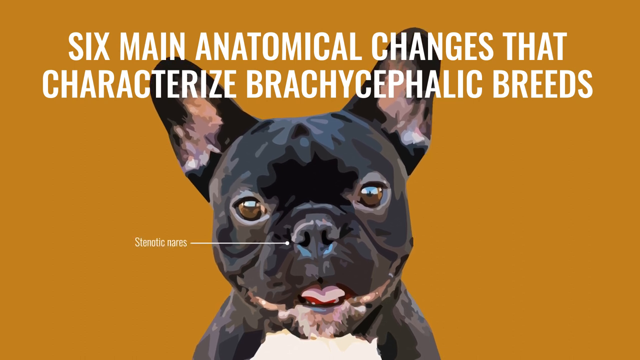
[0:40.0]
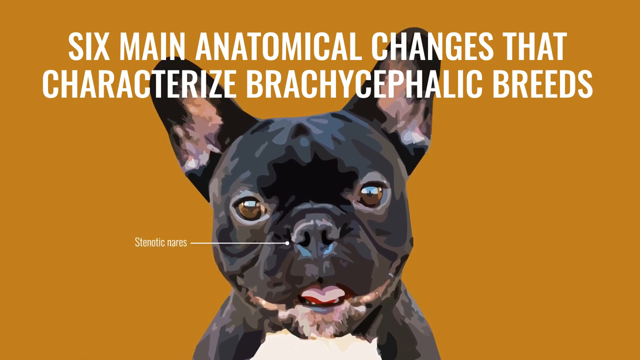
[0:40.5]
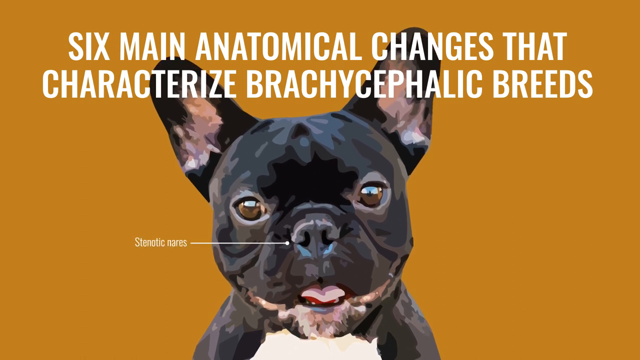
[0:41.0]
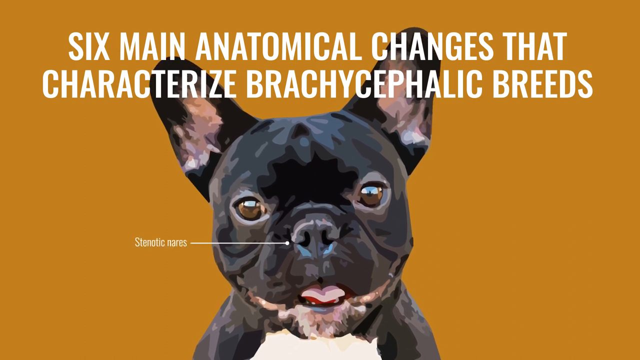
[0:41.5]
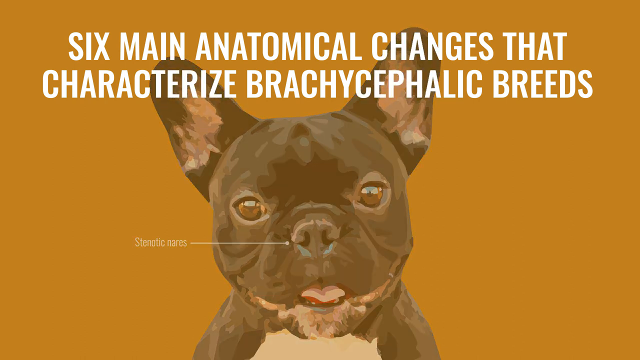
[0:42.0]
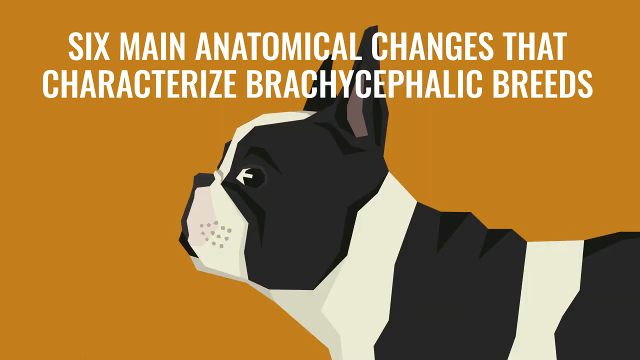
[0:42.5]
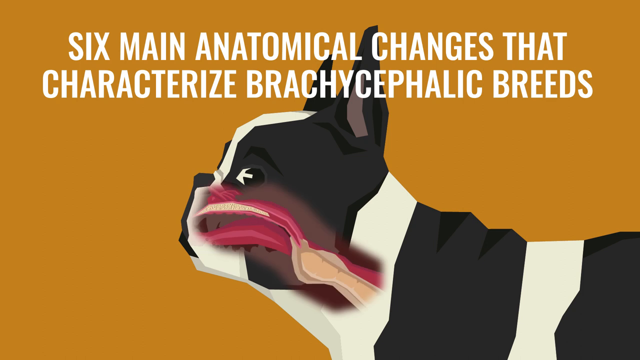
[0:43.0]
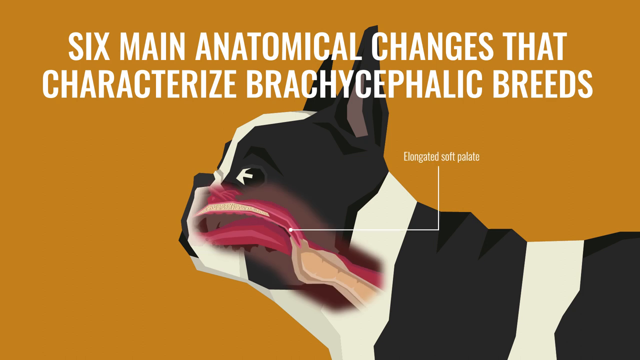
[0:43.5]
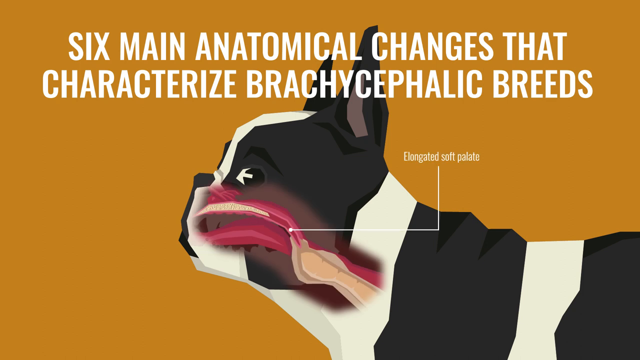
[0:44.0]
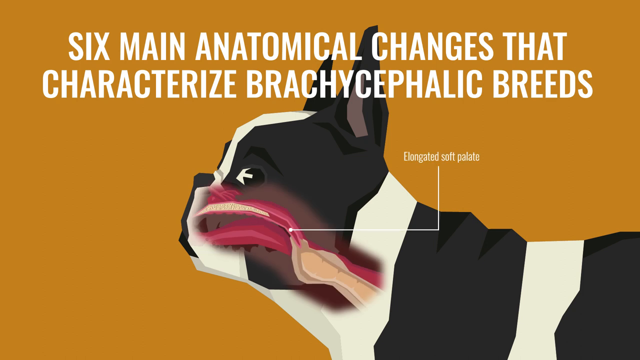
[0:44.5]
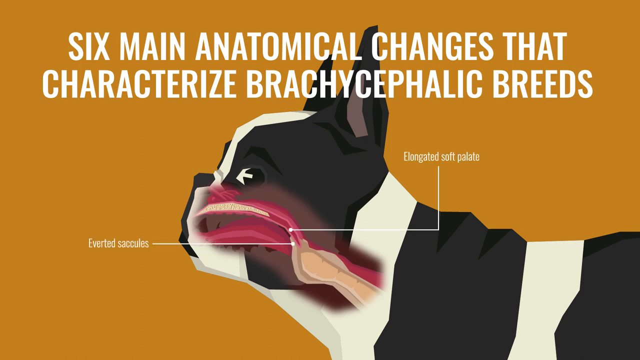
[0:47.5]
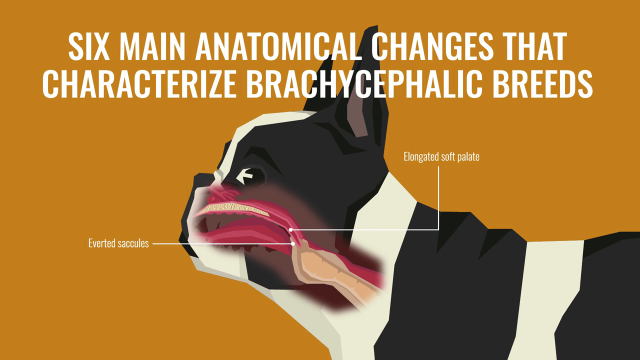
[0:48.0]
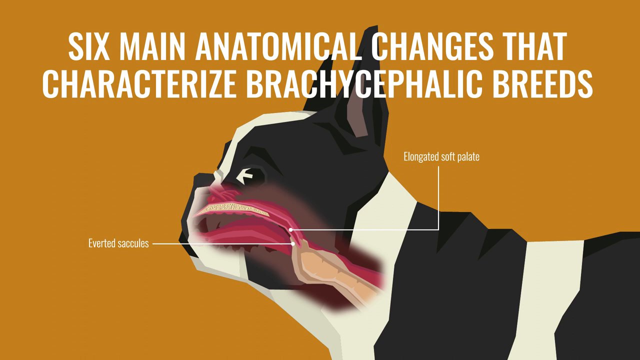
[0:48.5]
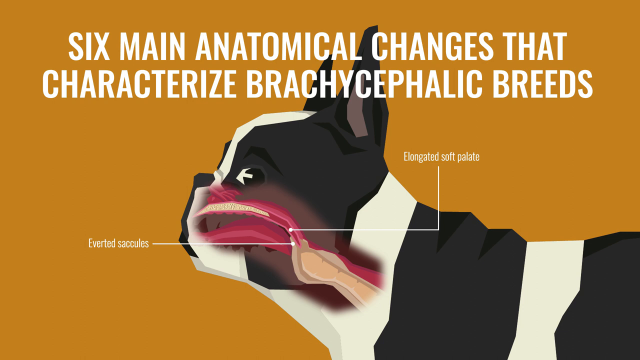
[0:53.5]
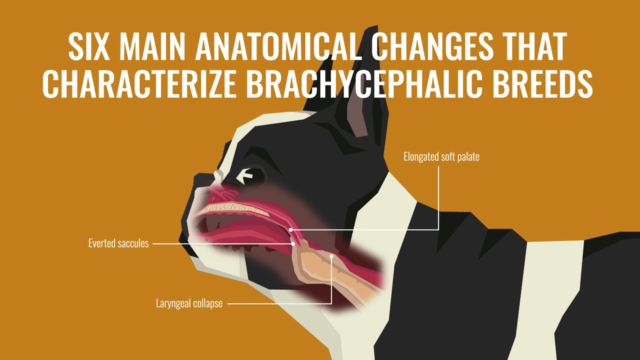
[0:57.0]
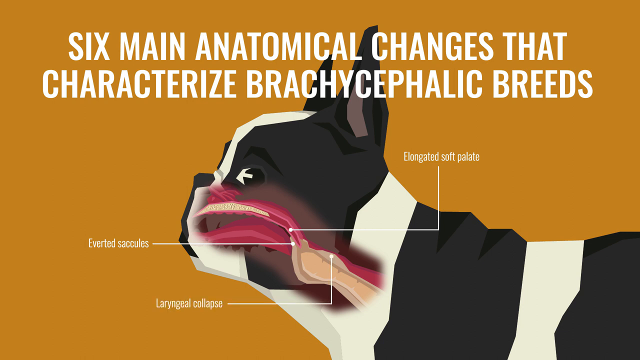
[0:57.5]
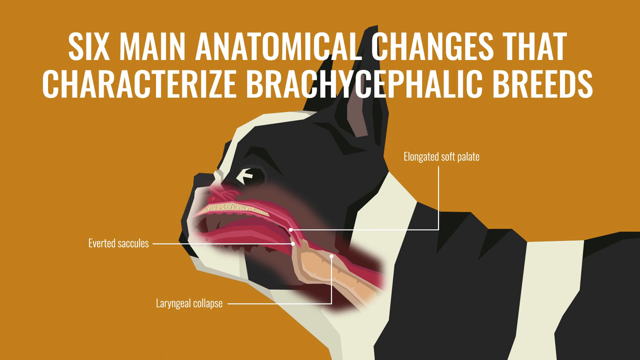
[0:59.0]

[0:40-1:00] The camera hovers on the bulldog with the nose caption for a moment, and then a new picture appears: a white and black bulldog seen from the side, in a kind of cutaway view of its head. Beneath the skin, the different tubes running from the nose and the mouth to the throat are visible, sort of as if the head is being dissected. A caption reading "elongated soft palate" appears, with its line pointing to just before the start of the throat and the nasal passage. Another caption, "everted saccules," points to the very beginning of the throat, apparently at the end of the mouth passage. A last caption, "laryngeal collapse," points within the throat, where a little section is labeled at the top.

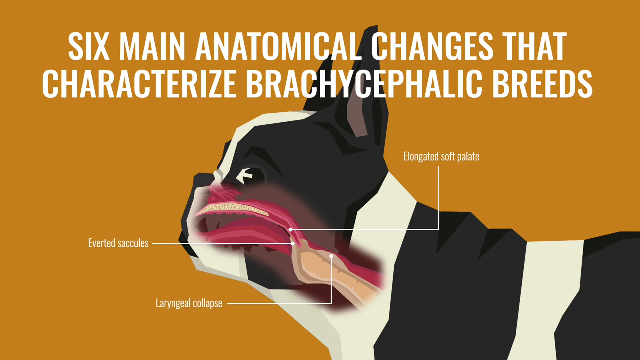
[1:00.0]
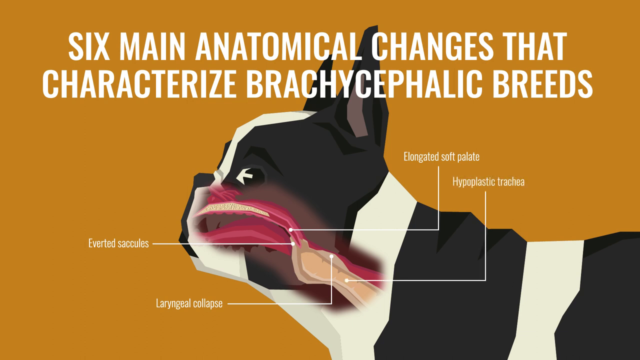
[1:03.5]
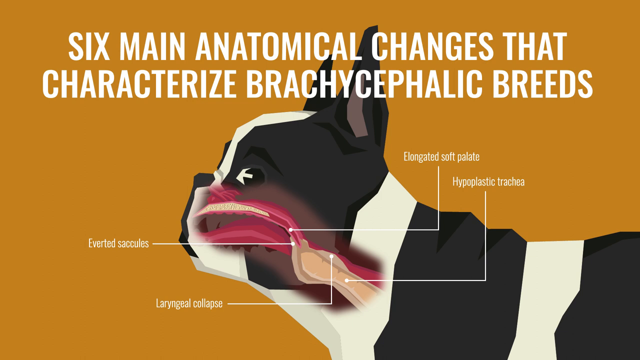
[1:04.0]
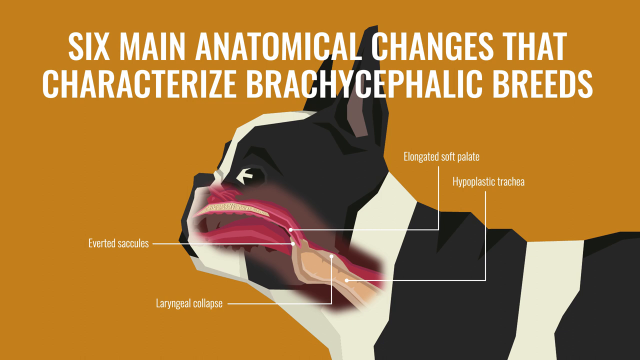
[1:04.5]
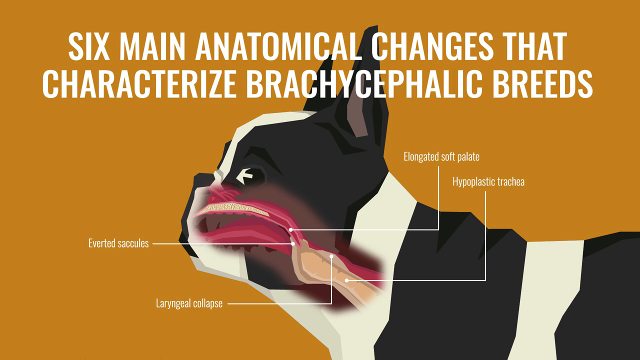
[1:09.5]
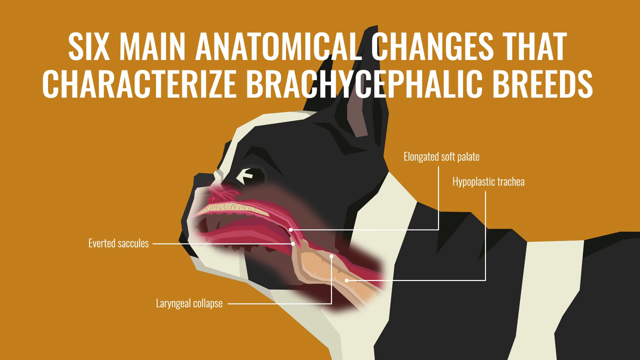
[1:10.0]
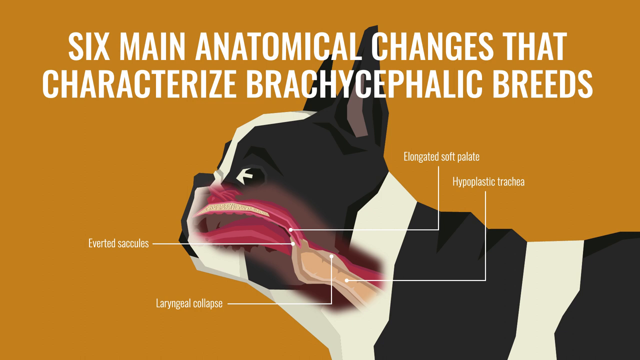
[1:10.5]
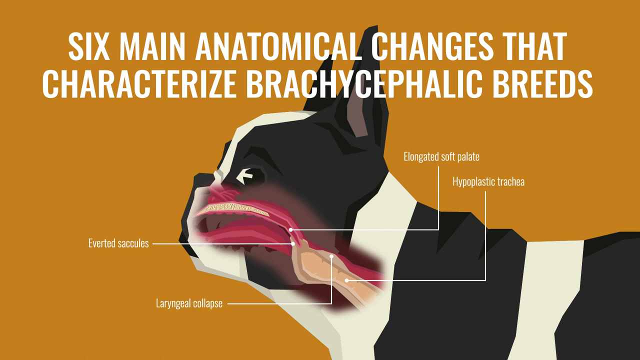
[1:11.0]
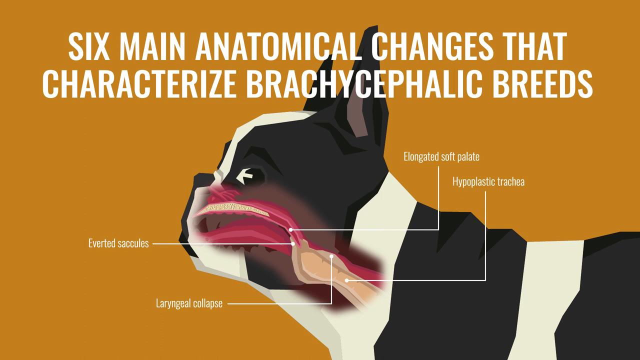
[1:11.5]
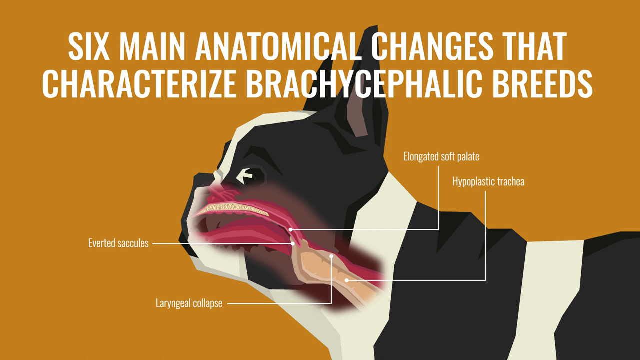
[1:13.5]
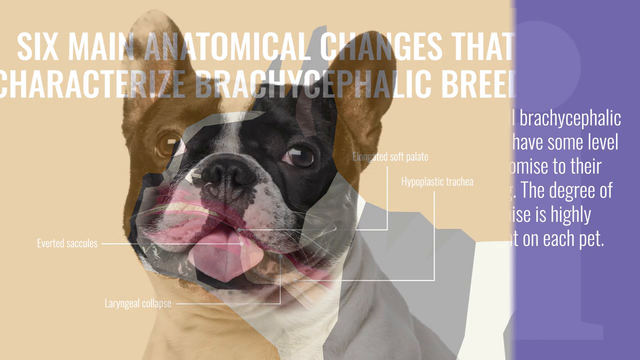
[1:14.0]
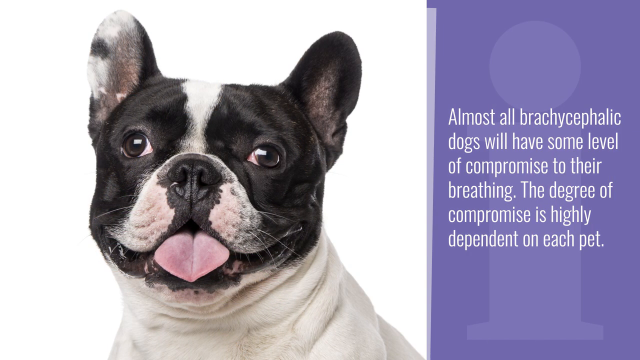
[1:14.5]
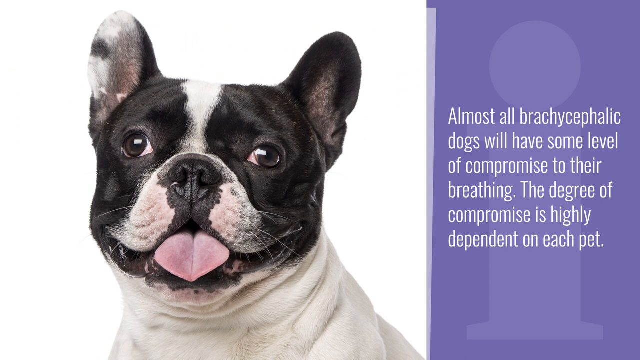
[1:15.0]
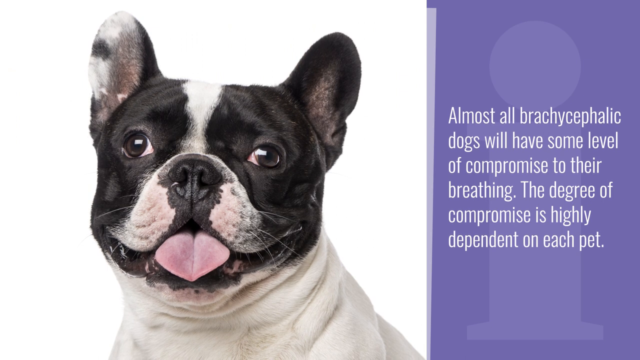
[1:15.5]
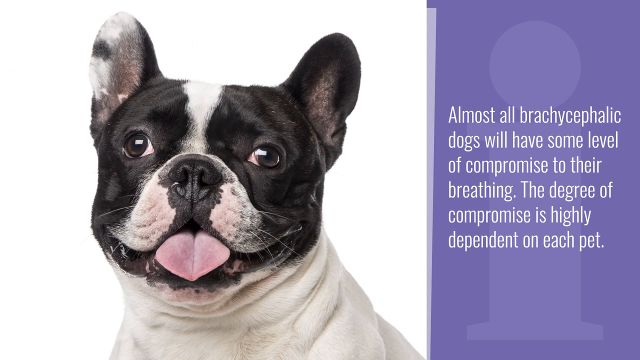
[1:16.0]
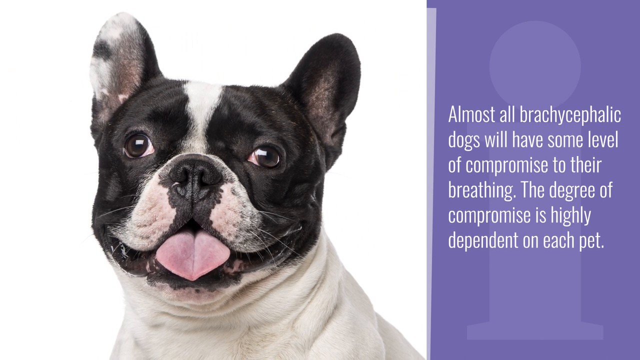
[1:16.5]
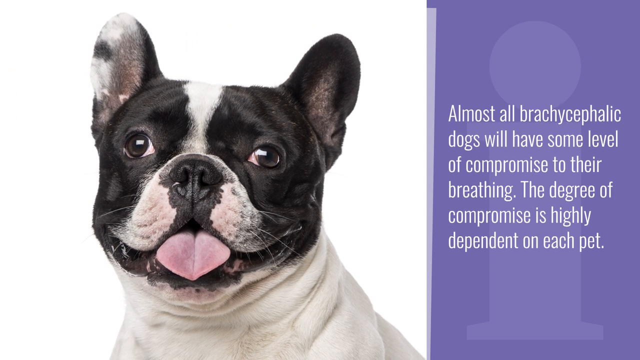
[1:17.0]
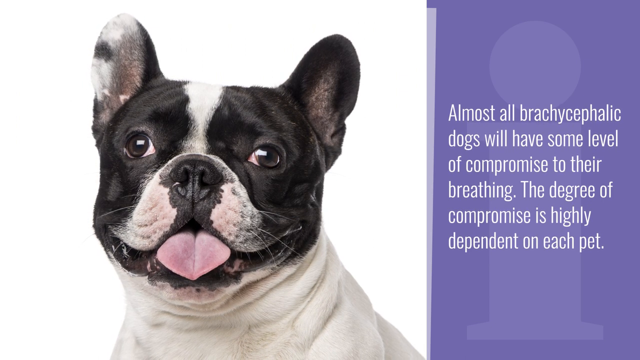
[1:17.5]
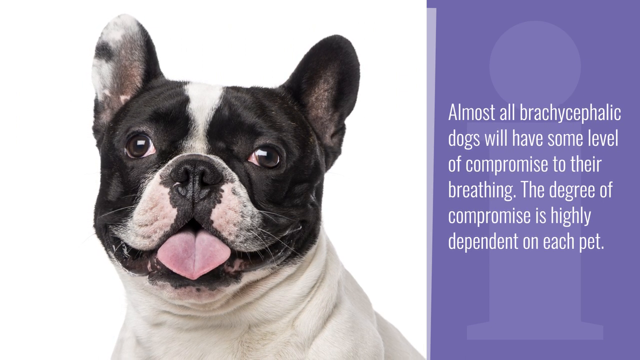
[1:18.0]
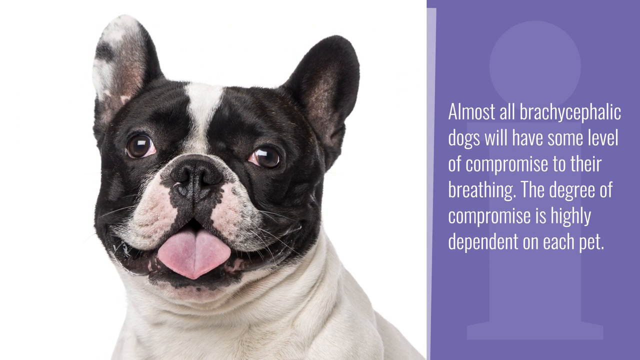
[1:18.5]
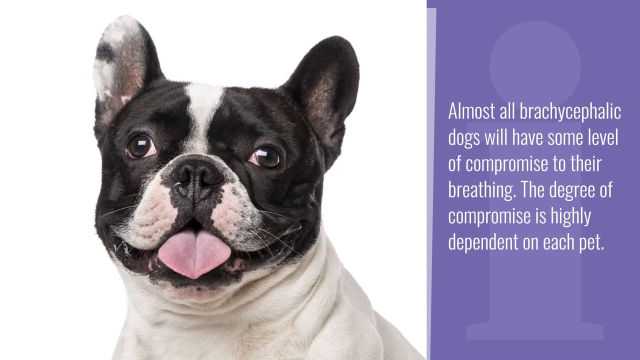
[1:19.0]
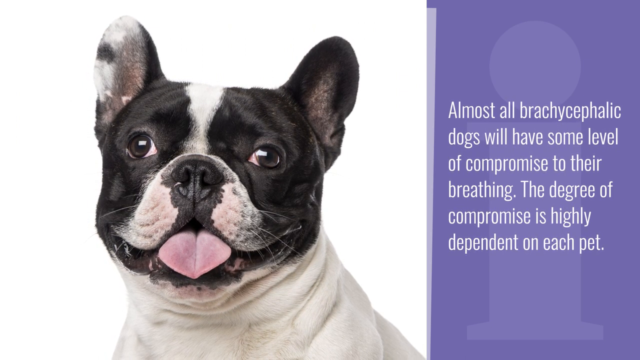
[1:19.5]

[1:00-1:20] The same side cutaway view remains, and the title still says "six main anatomical changes that characterize brachycephalic breeds." Another caption pops up, "hypoplastic trachea," pointing to roughly the center of the throat. A new screen then appears. On the left side, against a white background, is an actual photo, not a cartoon, of a black and white bulldog with its tongue sticking out, staring straight ahead. It has a white stripe down the center of its head, and its body appears to be all white. Its ears are standing straight up: the right ear is black on the outside and white with a black spot on the inside, while the other ear is much darker, almost entirely black, with just a little lighter pinkish color at the very center. On the right side, on a purple background, the text says "Almost all brachycephalic dogs will have some level of compromise to their breathing. The degree of compromise is highly dependent on each pet."